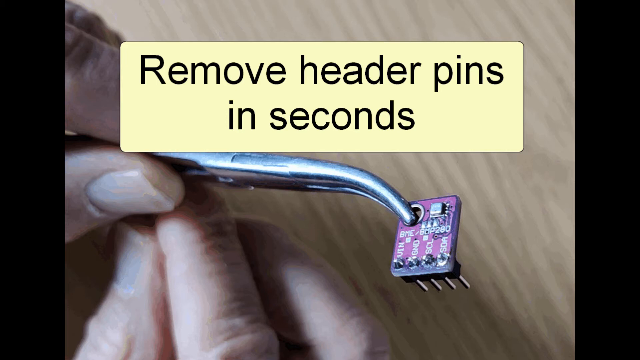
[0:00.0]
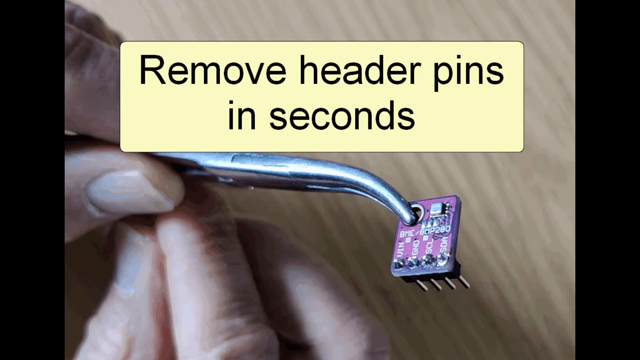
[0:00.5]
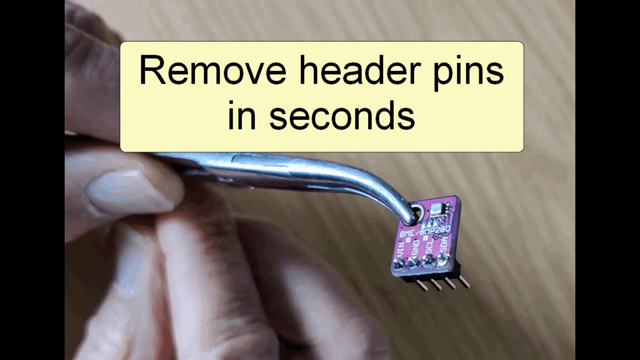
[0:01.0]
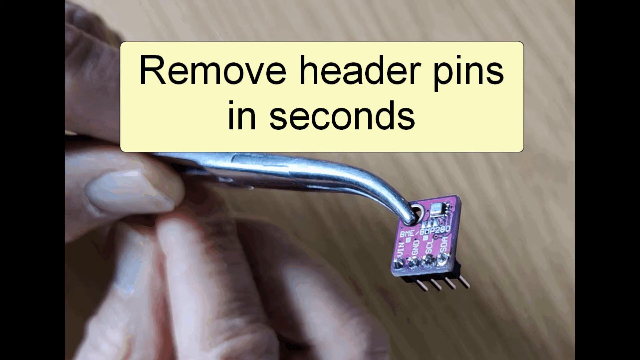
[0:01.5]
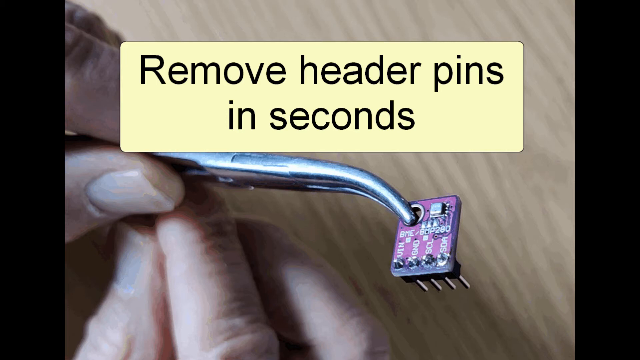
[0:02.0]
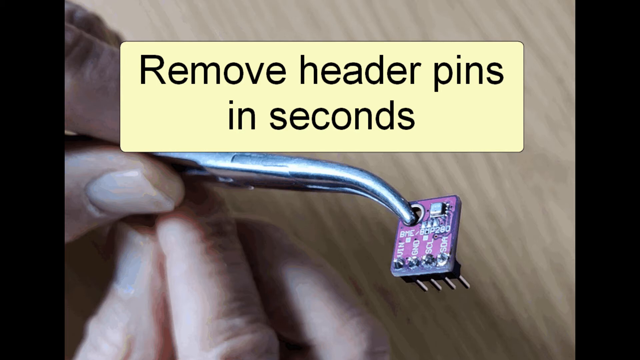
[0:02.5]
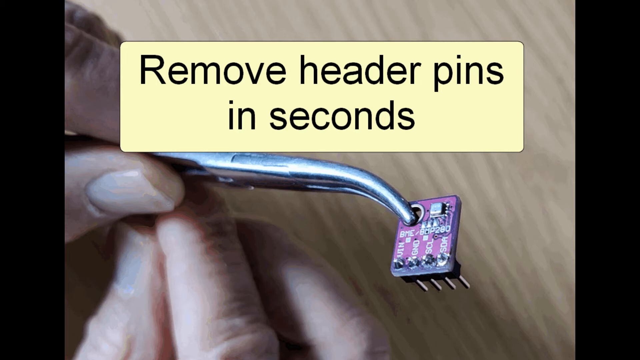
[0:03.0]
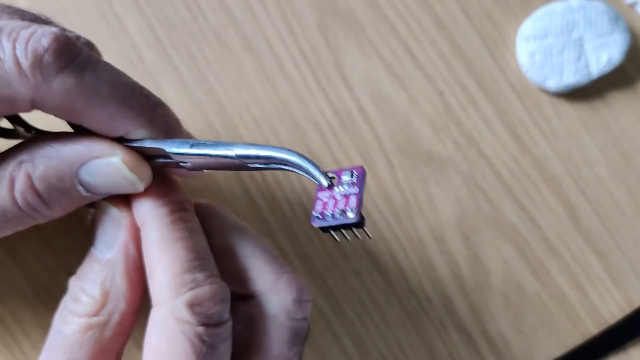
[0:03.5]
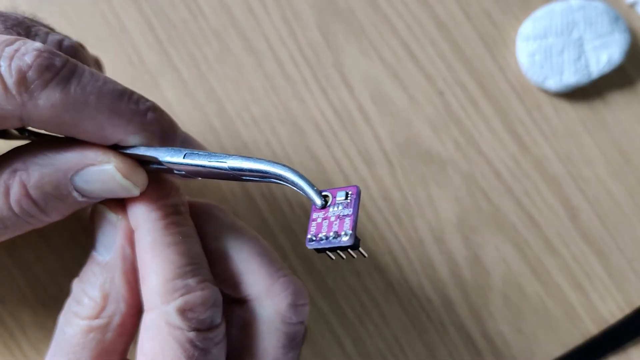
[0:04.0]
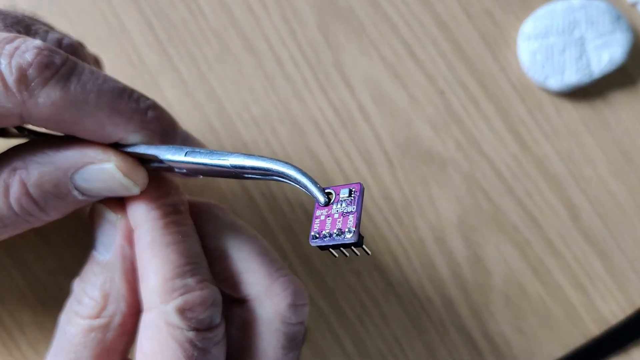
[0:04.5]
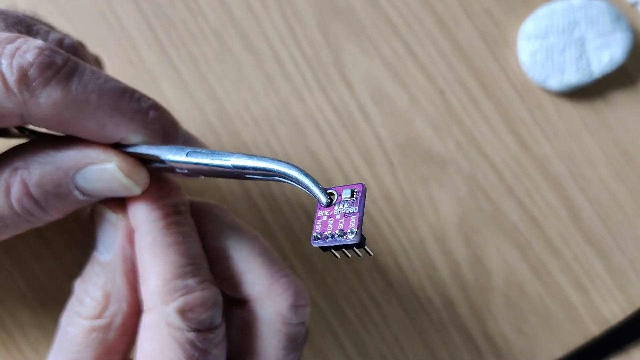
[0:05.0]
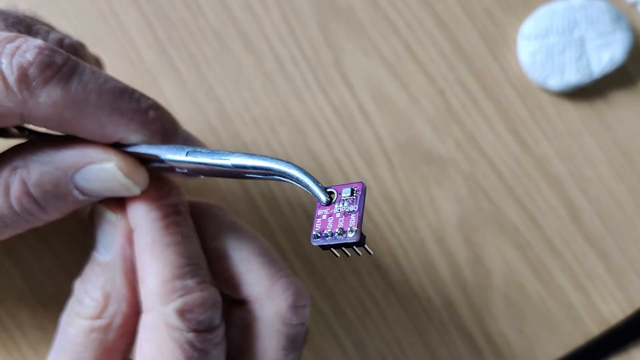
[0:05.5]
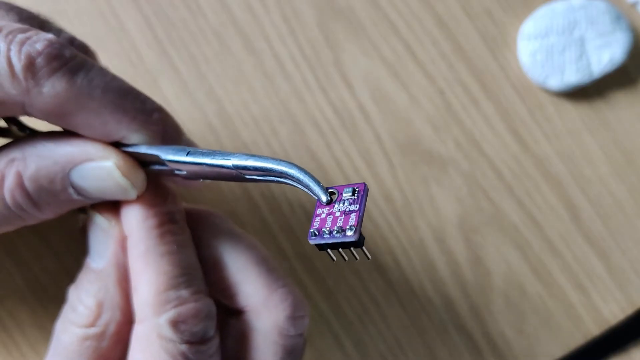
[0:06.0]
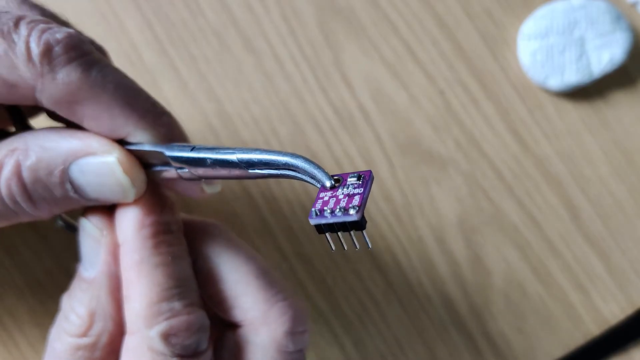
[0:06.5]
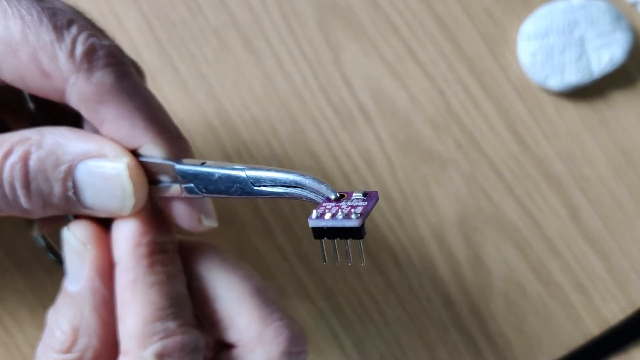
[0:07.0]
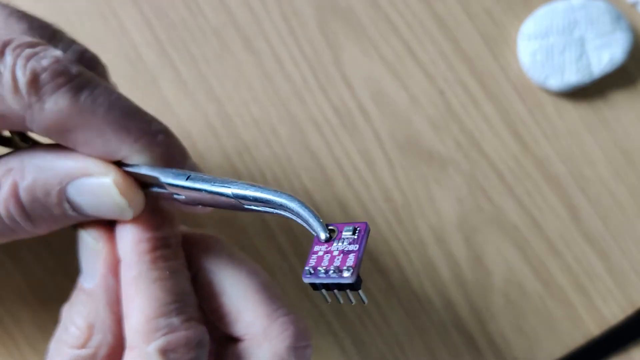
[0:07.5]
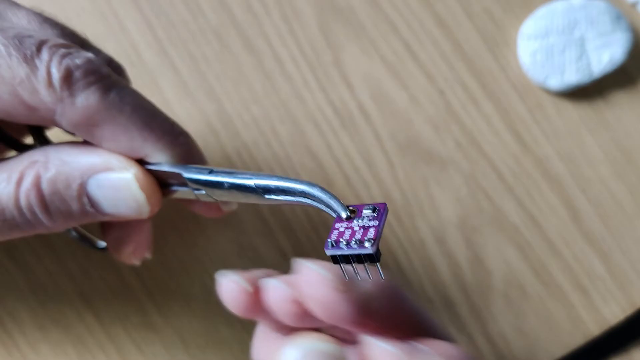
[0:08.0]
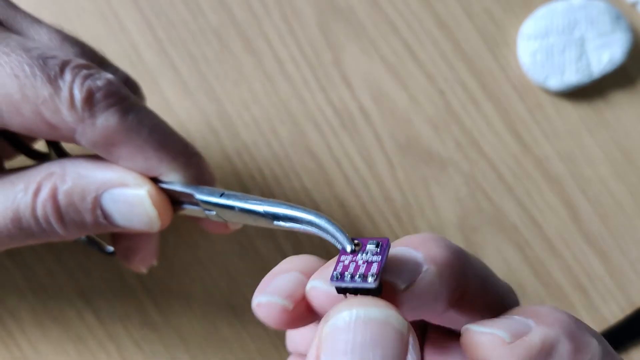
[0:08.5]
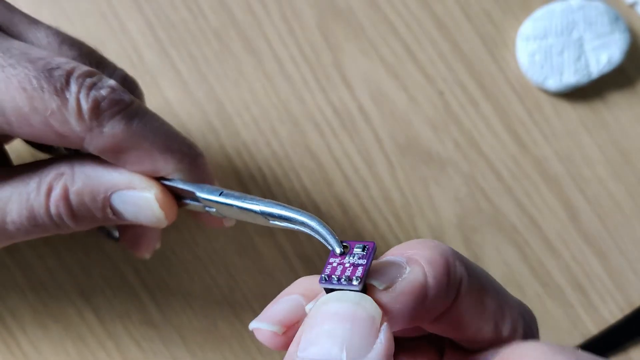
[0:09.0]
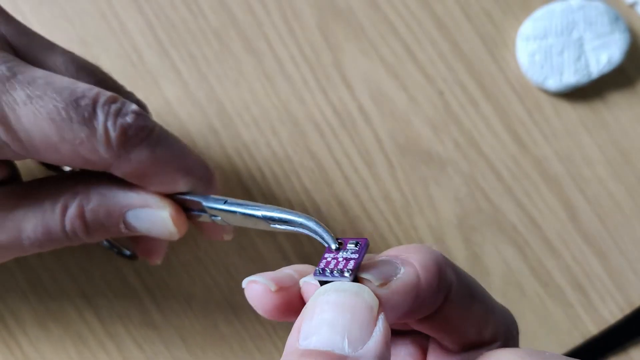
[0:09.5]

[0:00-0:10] Two hands appear, along with a tweezer and a small number of header pins; apparently four header pins are attached to the tweezer. The video seems to show that the pins need to be heated first, after which a few pins like these can be removed very quickly by the man holding the tweezer.